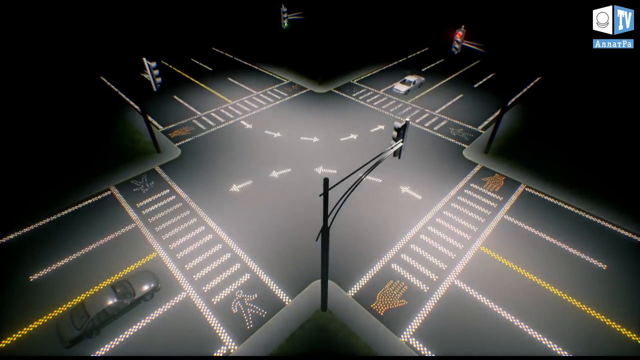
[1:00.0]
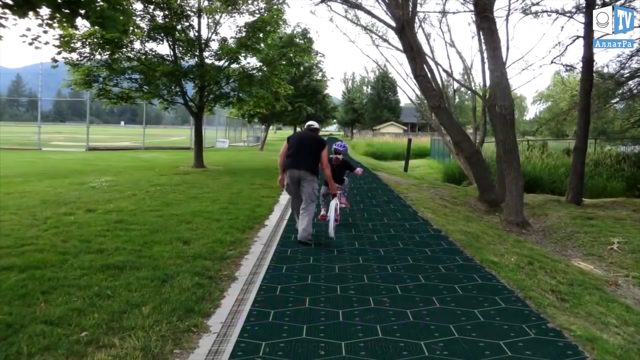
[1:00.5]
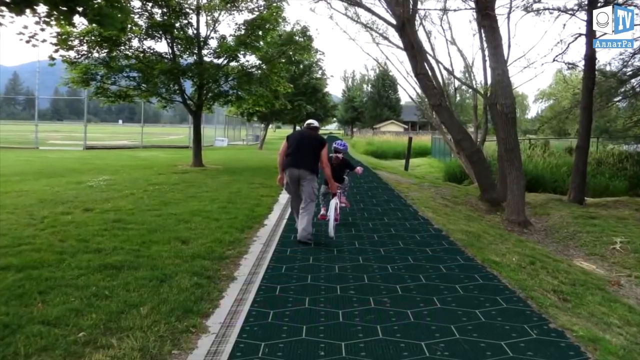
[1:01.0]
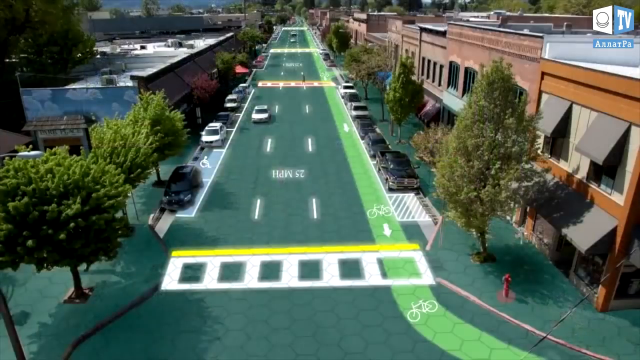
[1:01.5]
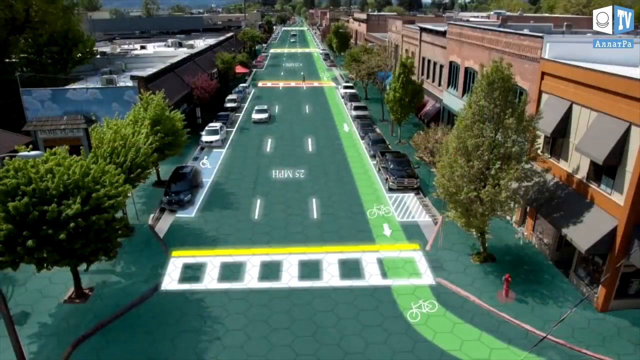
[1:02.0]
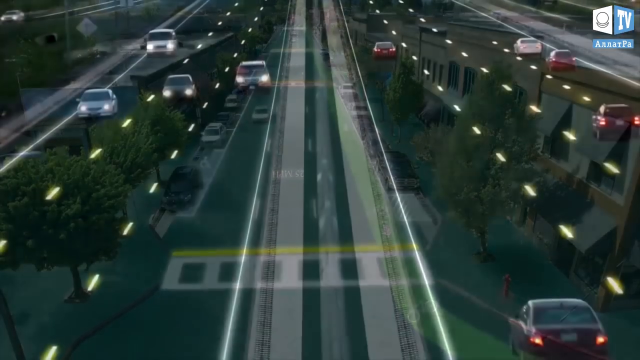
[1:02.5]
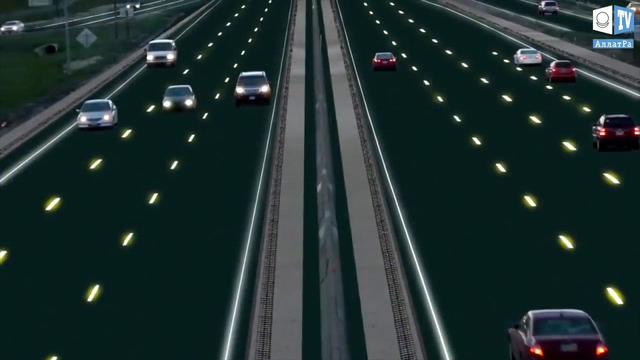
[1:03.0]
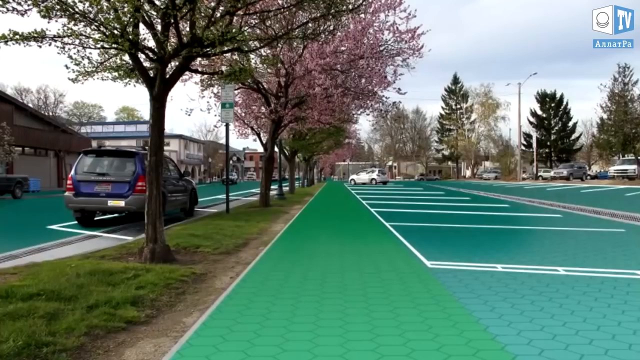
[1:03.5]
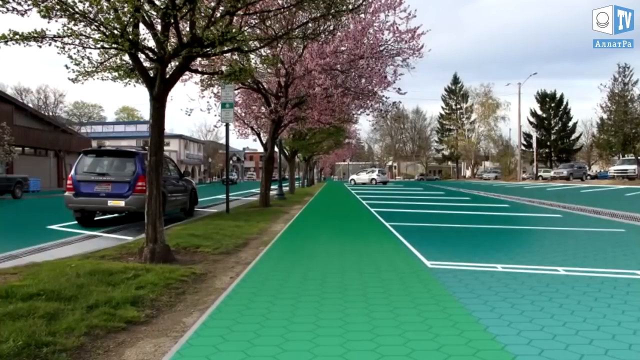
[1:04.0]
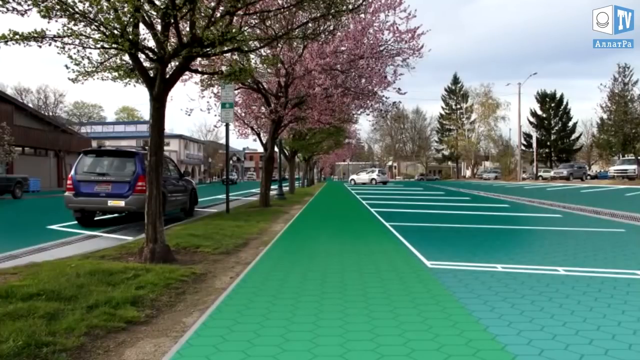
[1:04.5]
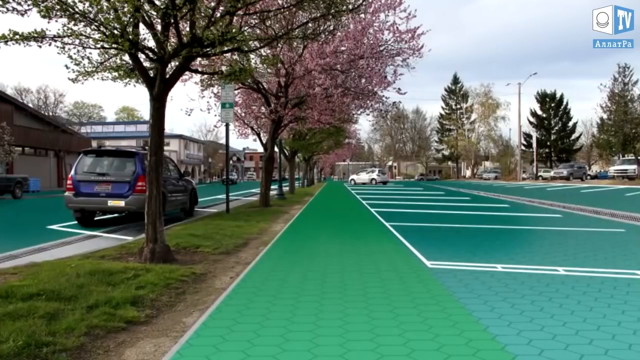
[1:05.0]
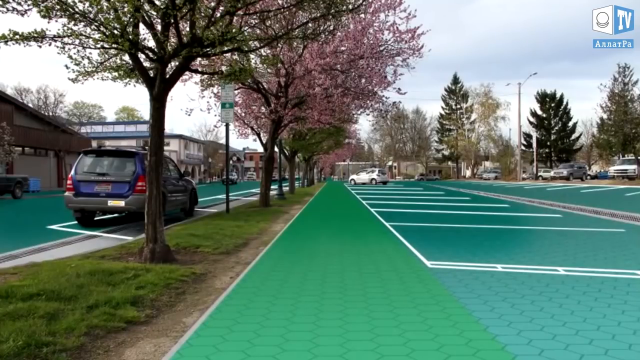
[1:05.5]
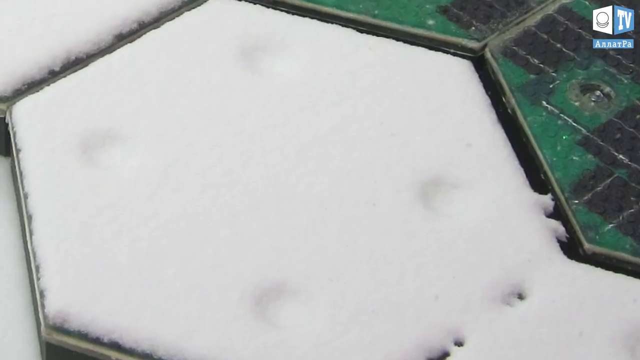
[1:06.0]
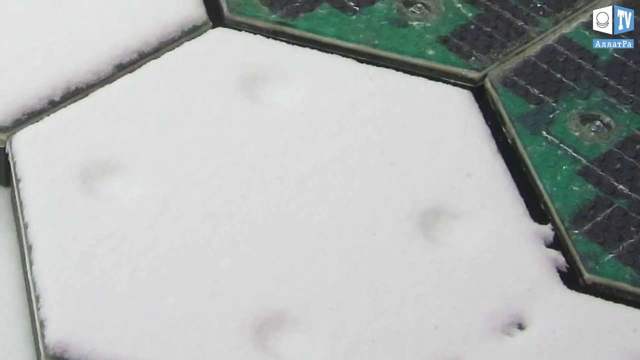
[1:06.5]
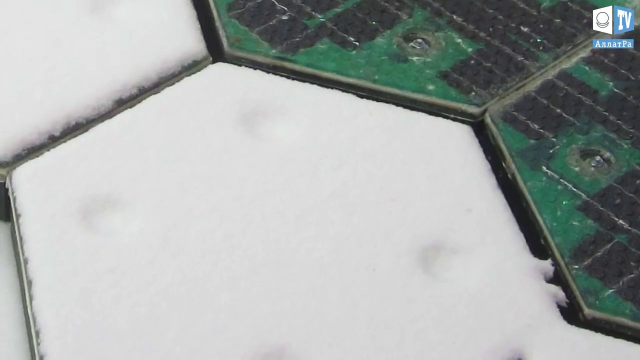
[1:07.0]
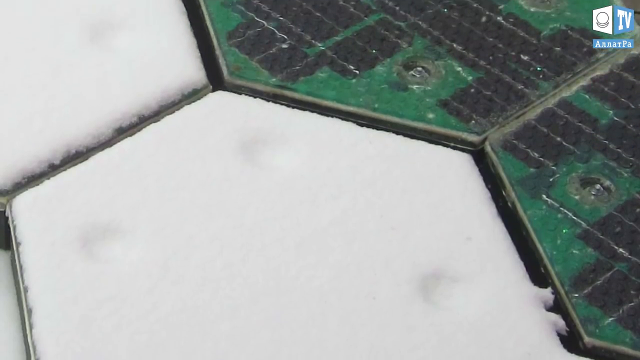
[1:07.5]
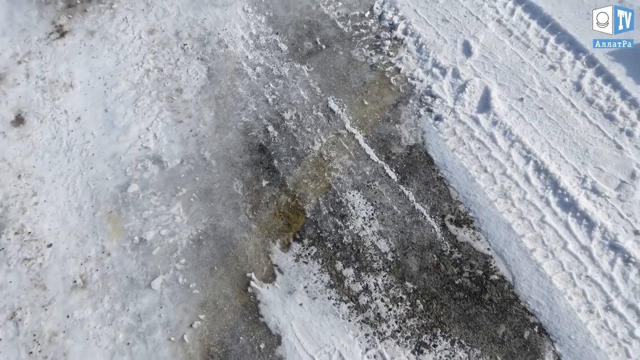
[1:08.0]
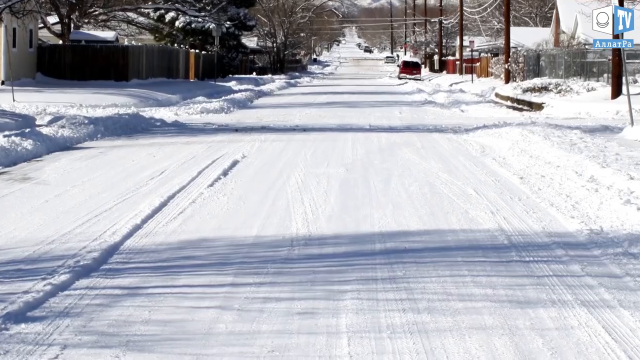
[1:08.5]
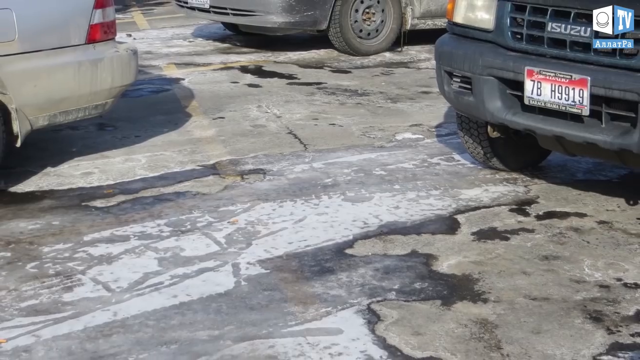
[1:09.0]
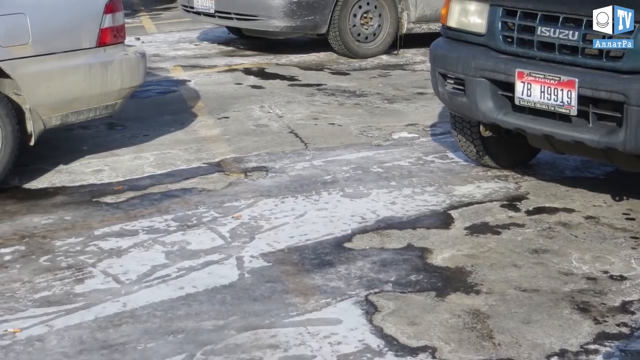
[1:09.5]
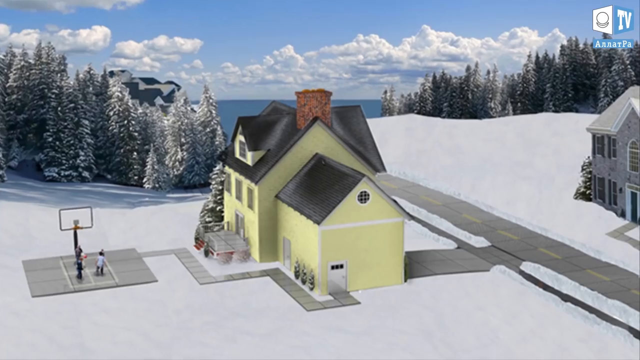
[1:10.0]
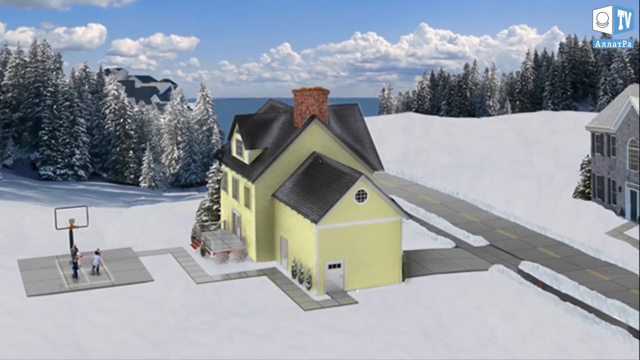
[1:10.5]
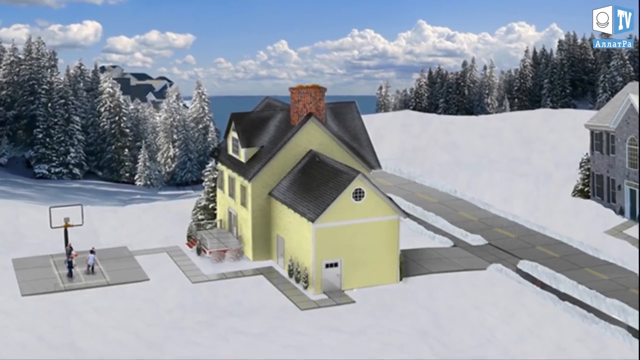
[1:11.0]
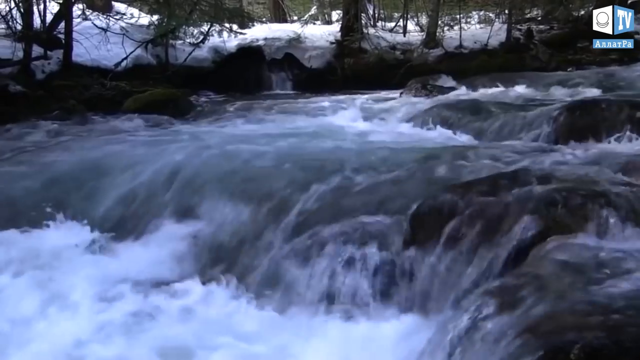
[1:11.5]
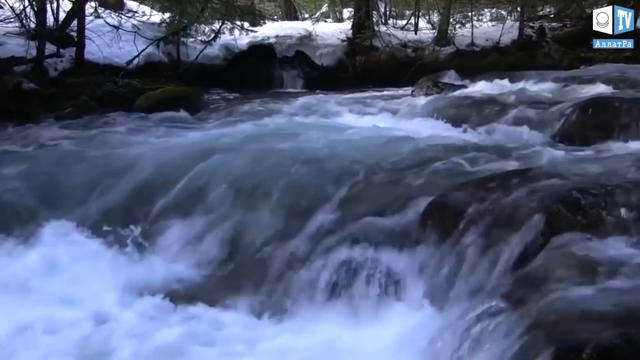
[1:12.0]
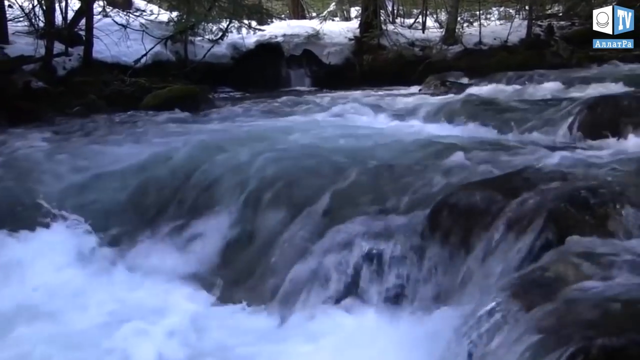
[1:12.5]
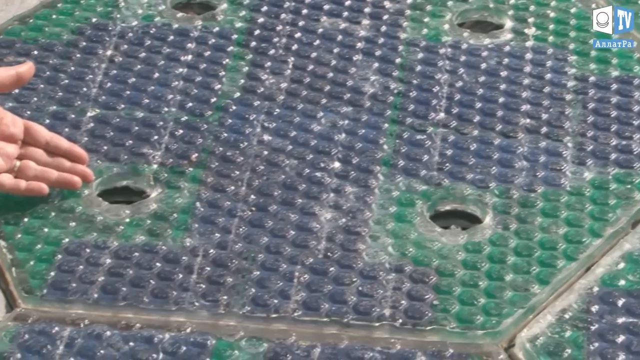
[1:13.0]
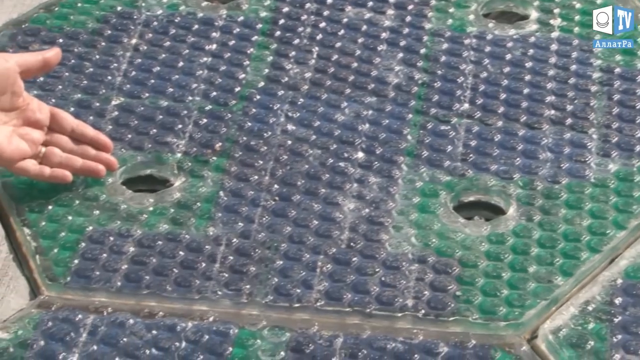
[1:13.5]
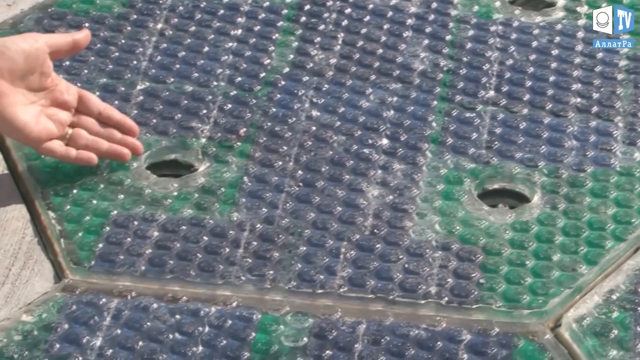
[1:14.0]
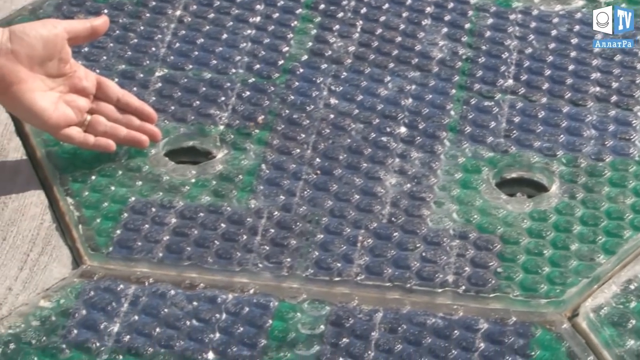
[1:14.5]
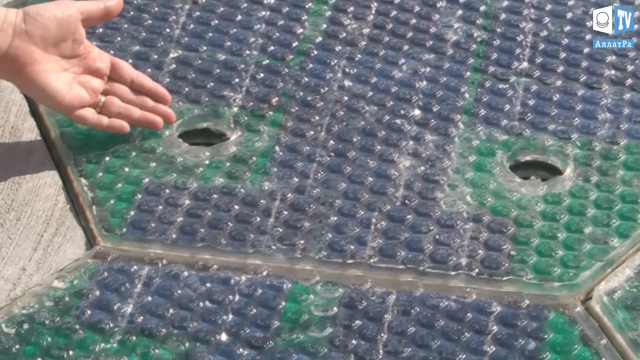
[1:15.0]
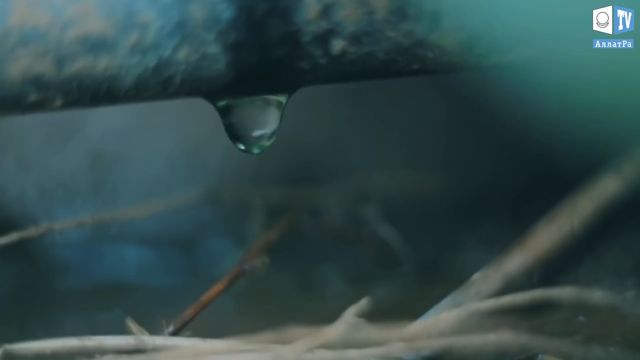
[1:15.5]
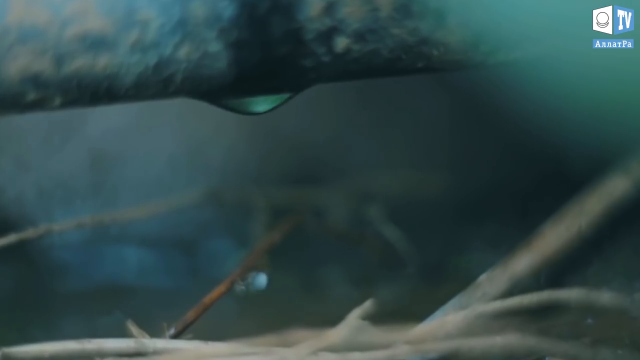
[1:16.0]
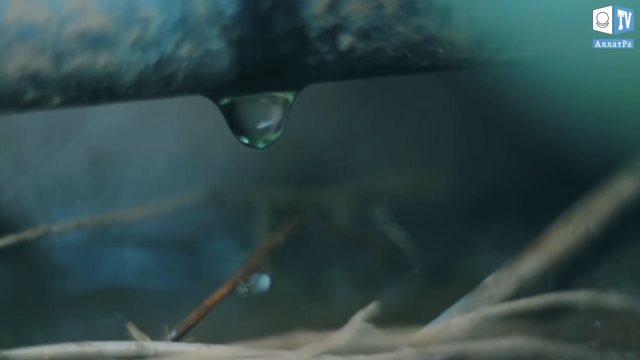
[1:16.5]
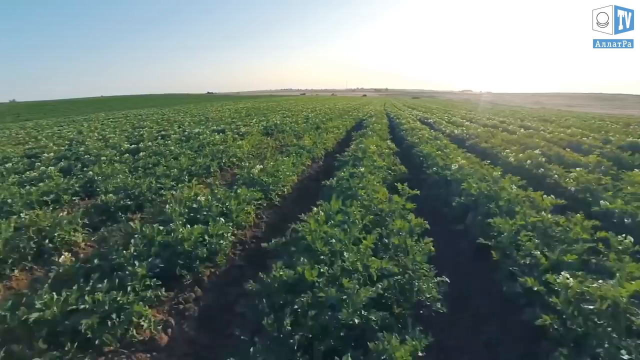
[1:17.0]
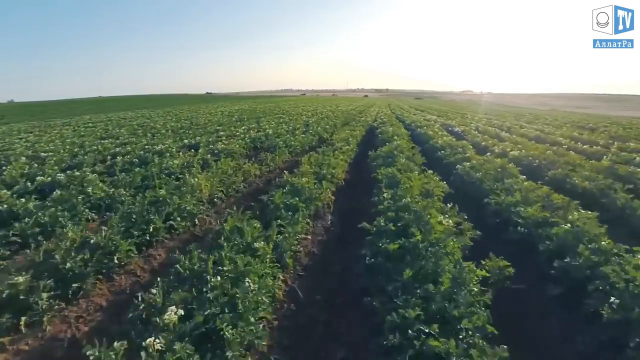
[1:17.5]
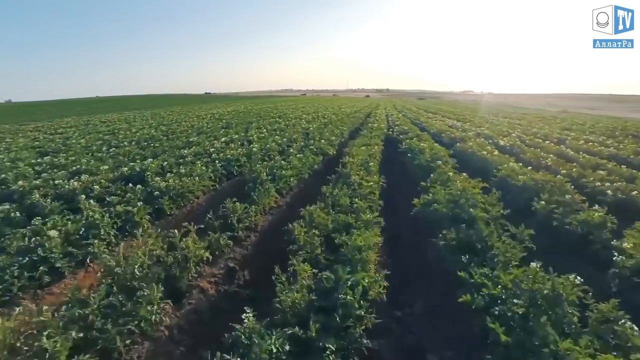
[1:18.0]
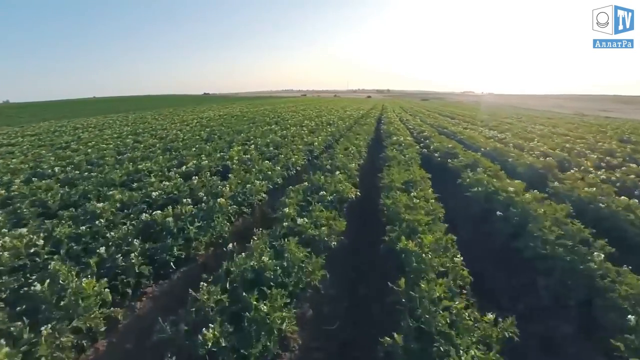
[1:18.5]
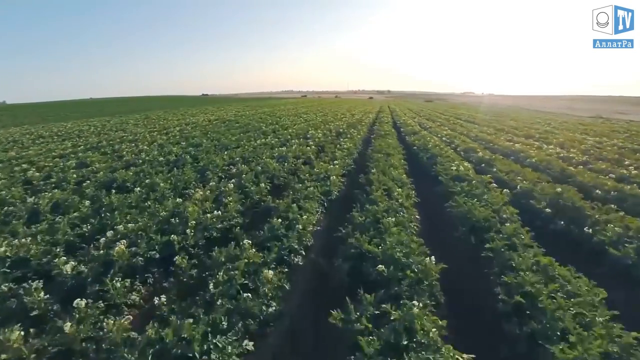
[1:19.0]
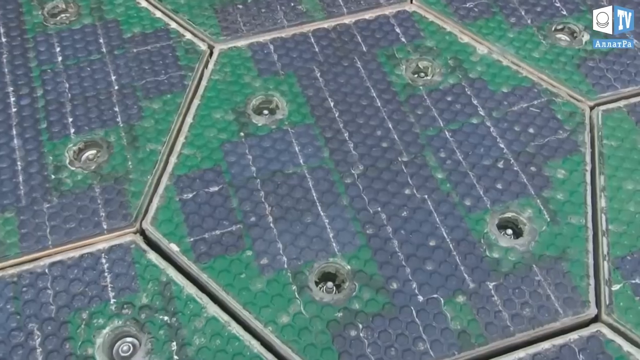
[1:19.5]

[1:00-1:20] The neighborhood appears with the words in a different language. The man lays down mats that seem to be rubber, wearing work boots. Octagons on the floor are shown, probably about a hundred placed together. They have six sides and look kind of like diamonds or a molecule shape, kind of sciencey. Each is light green on the border and deep dark blue in the middle, with white indentations around the corners. Pine trees are in the back, with snowy Rocky mountains. A small town is shown, then an open road, then an empty parking lot with no cars, all black asphalt with just a couple of yellow lines. Next comes the side of a street where a car would park. The man then works in his office, wearing a tan hat and a tan shirt against a white background, making the octagons.